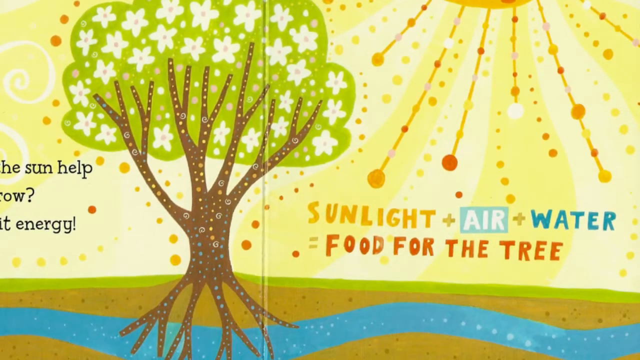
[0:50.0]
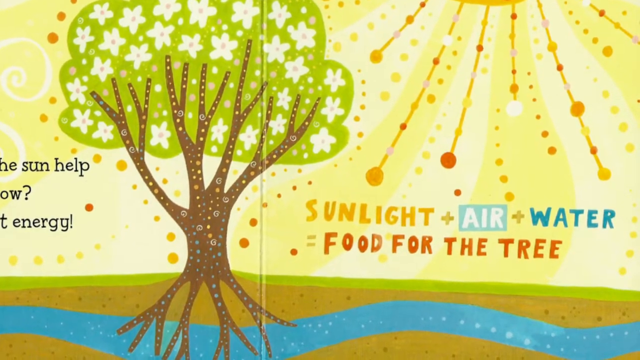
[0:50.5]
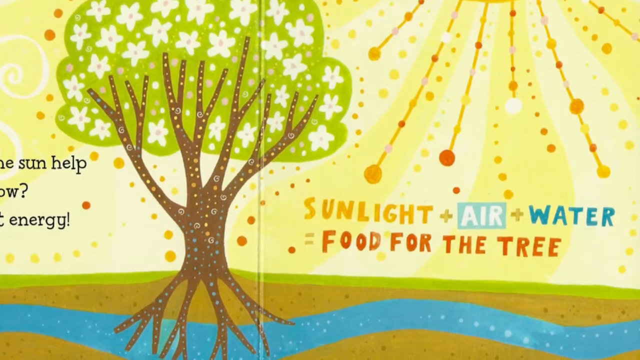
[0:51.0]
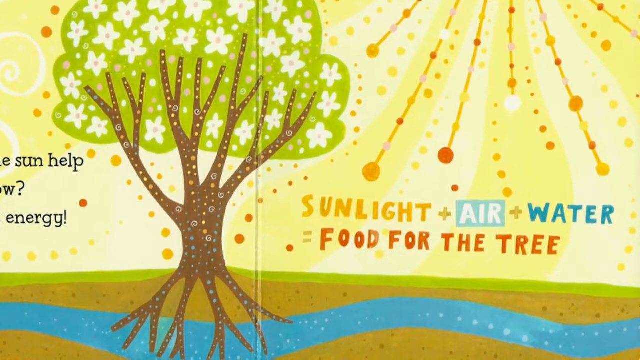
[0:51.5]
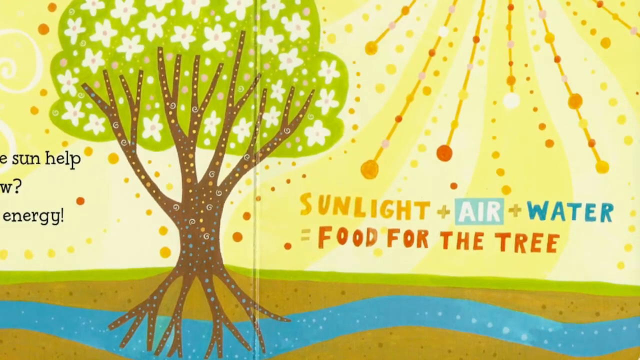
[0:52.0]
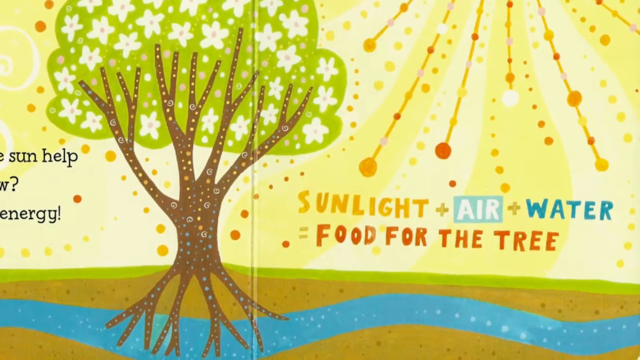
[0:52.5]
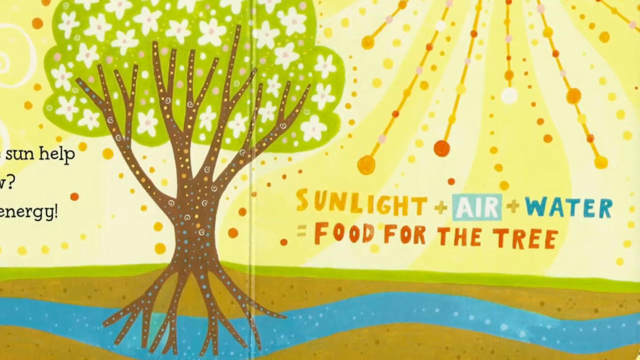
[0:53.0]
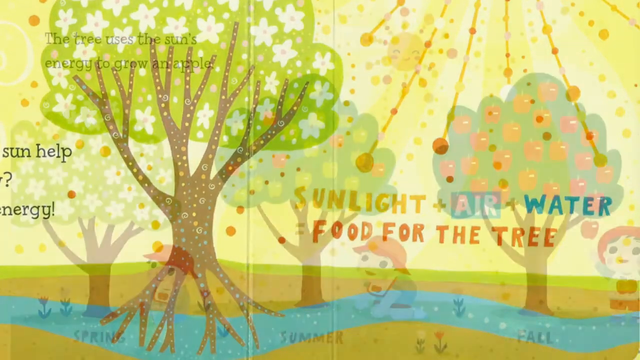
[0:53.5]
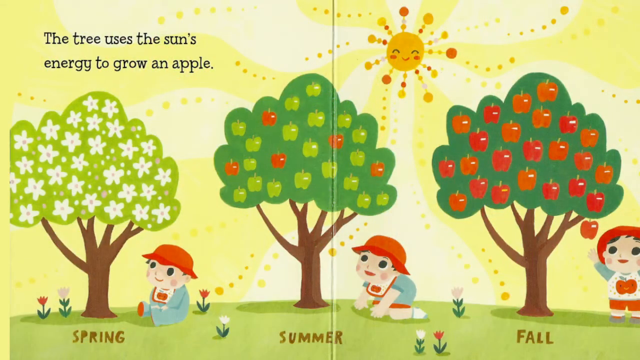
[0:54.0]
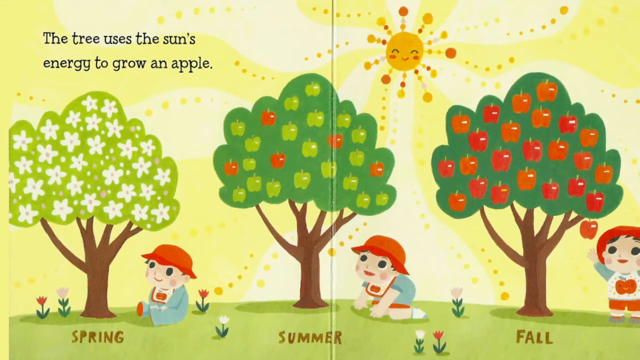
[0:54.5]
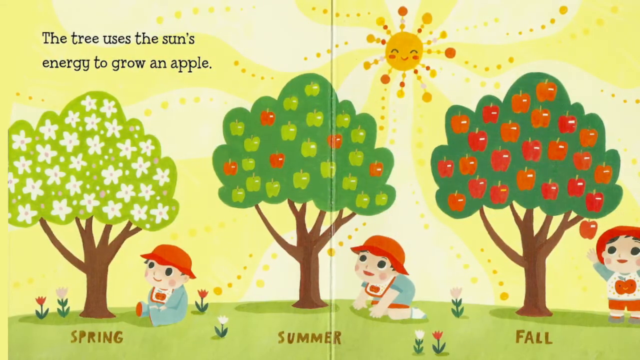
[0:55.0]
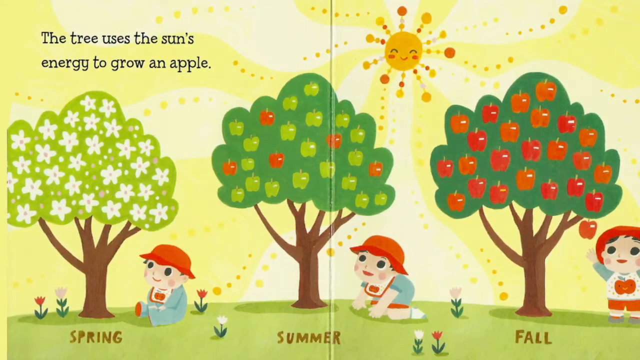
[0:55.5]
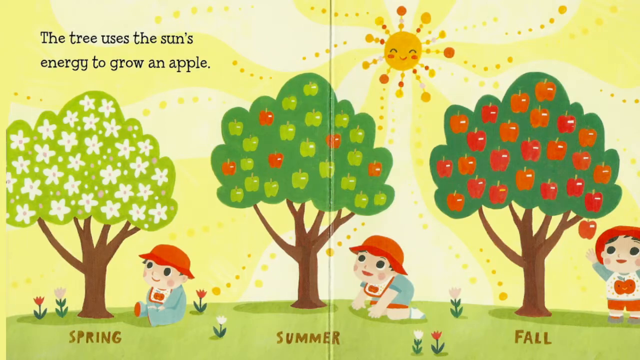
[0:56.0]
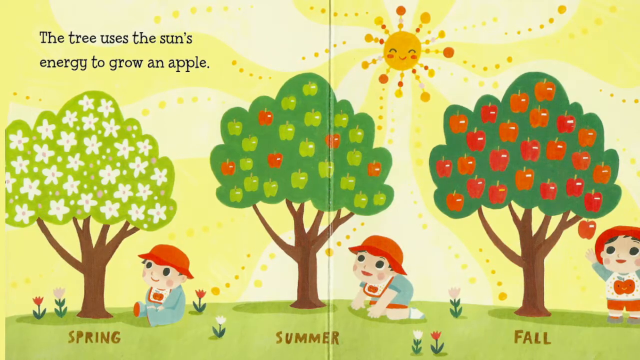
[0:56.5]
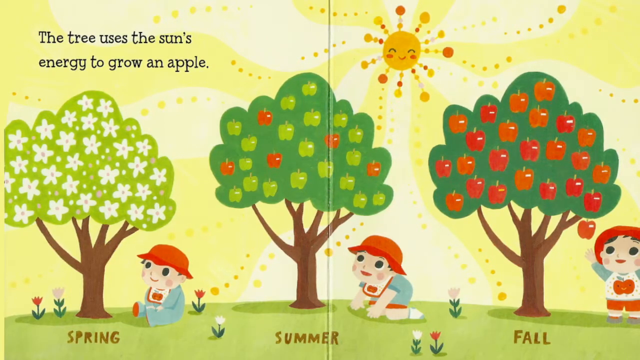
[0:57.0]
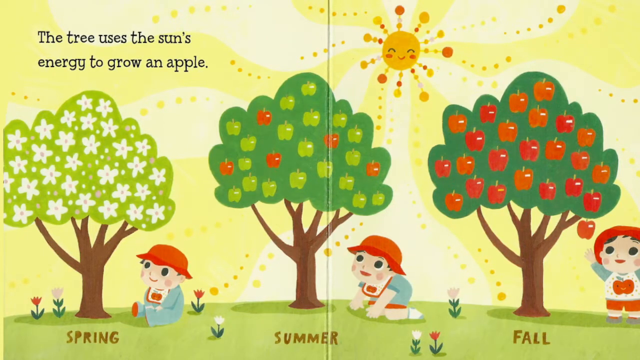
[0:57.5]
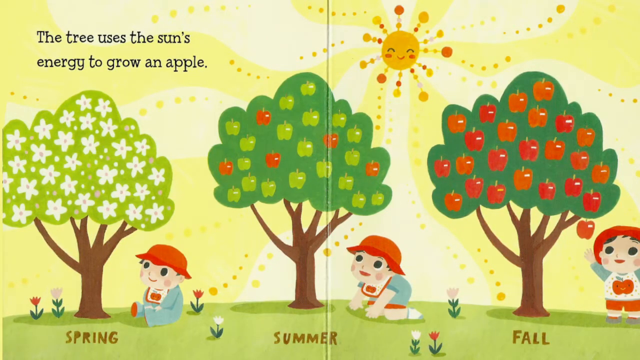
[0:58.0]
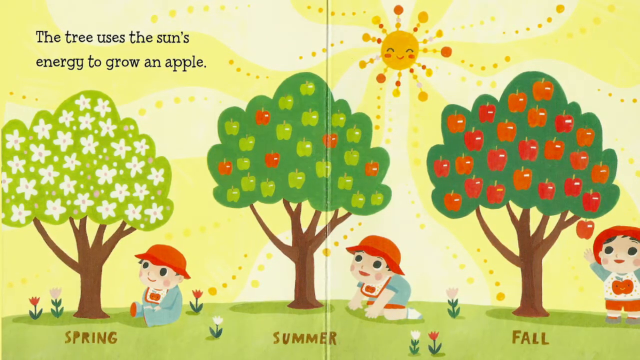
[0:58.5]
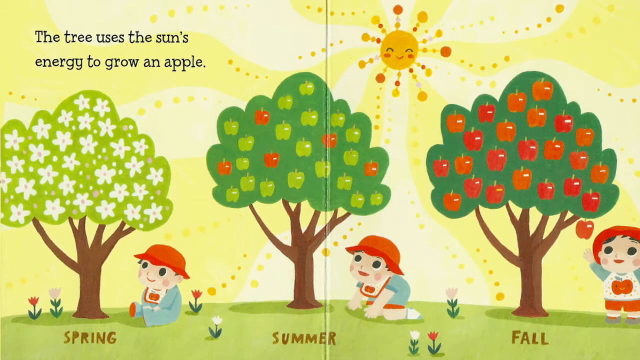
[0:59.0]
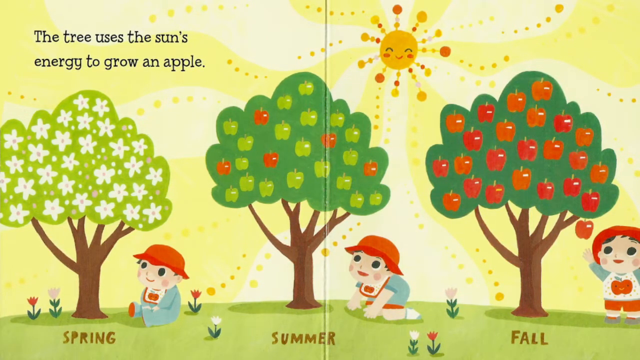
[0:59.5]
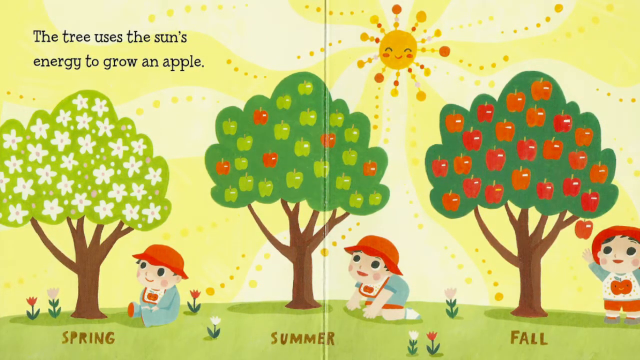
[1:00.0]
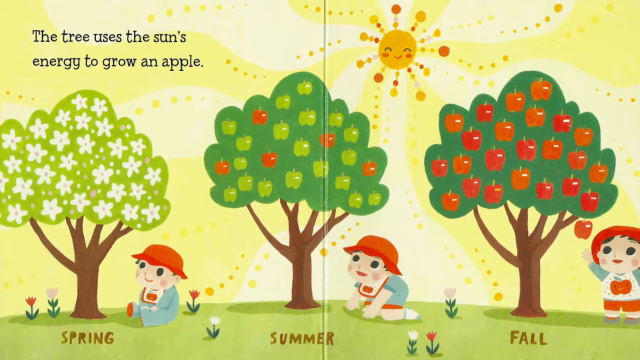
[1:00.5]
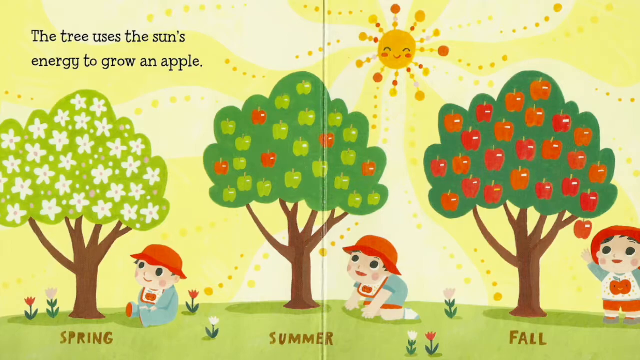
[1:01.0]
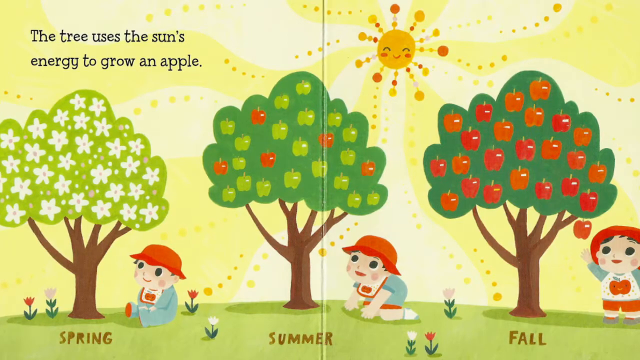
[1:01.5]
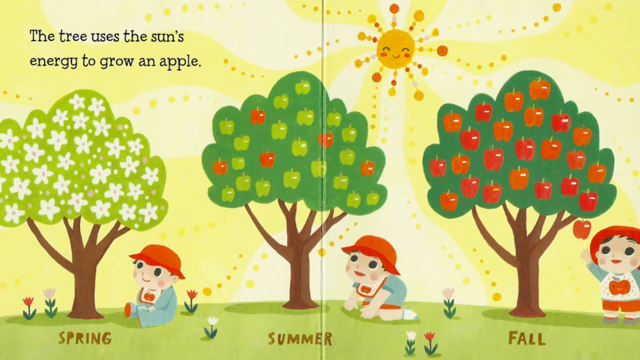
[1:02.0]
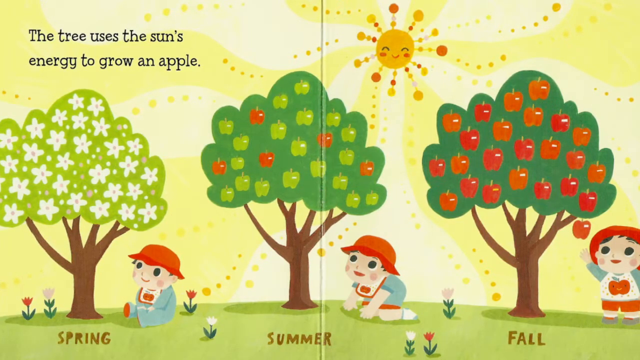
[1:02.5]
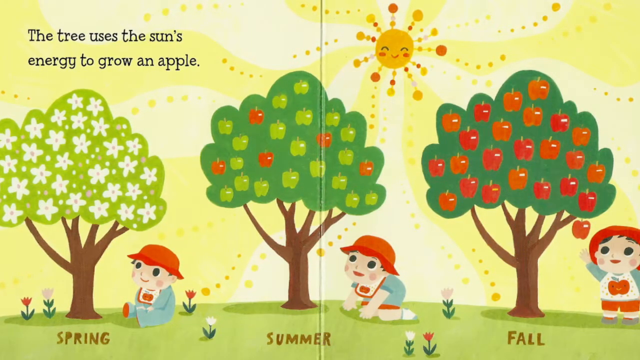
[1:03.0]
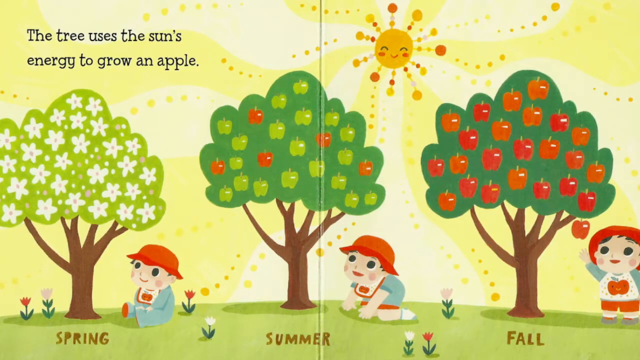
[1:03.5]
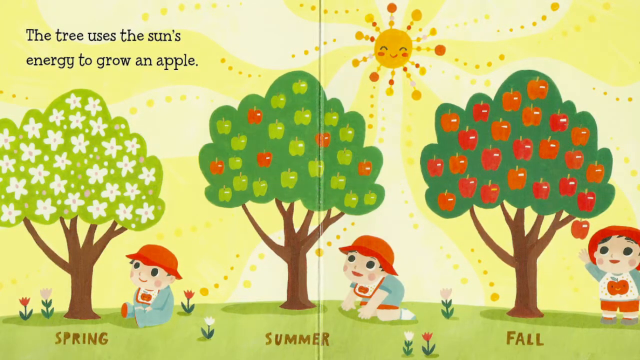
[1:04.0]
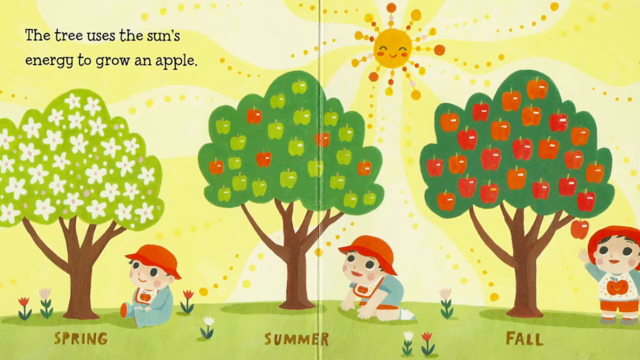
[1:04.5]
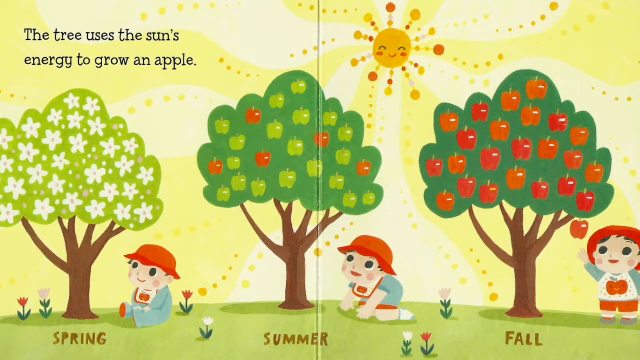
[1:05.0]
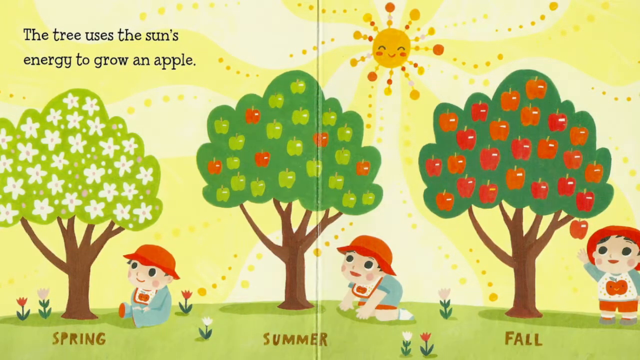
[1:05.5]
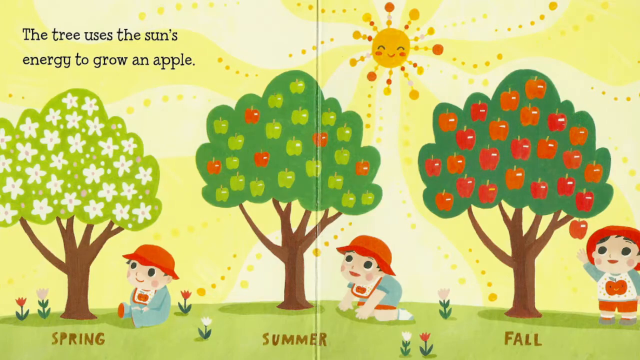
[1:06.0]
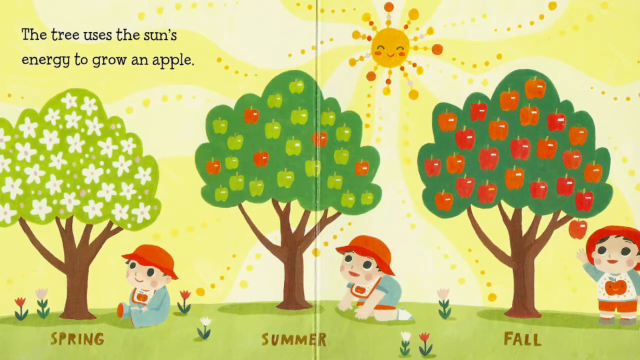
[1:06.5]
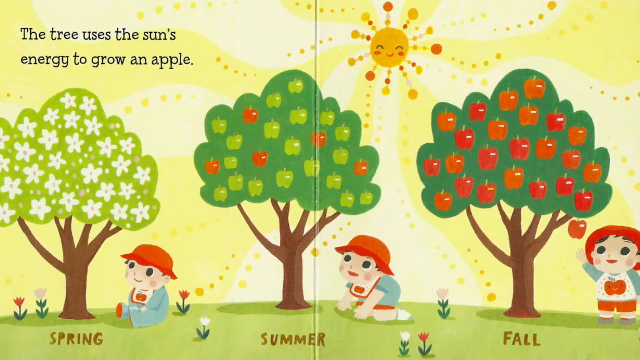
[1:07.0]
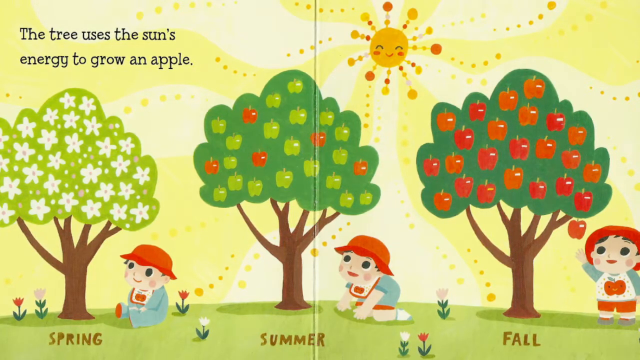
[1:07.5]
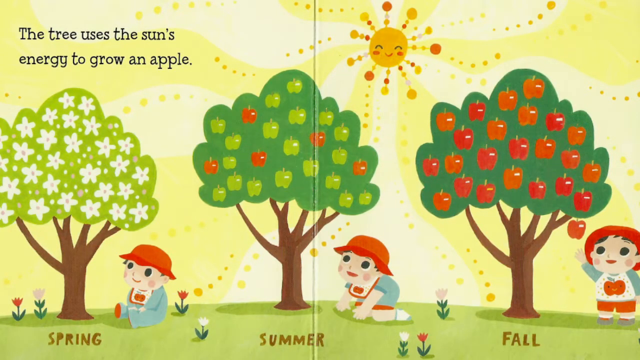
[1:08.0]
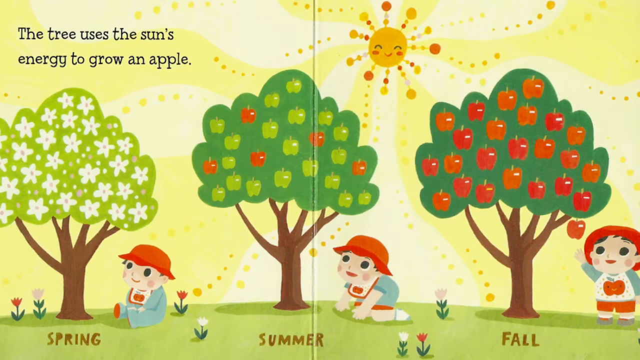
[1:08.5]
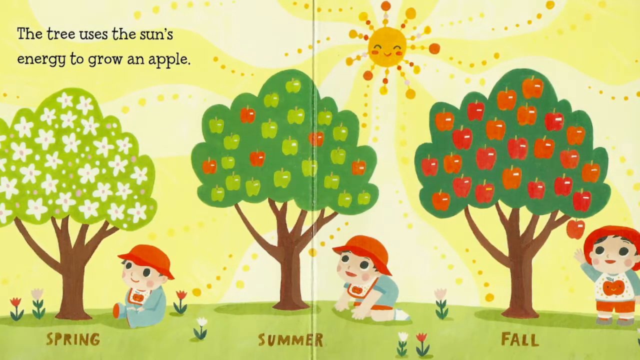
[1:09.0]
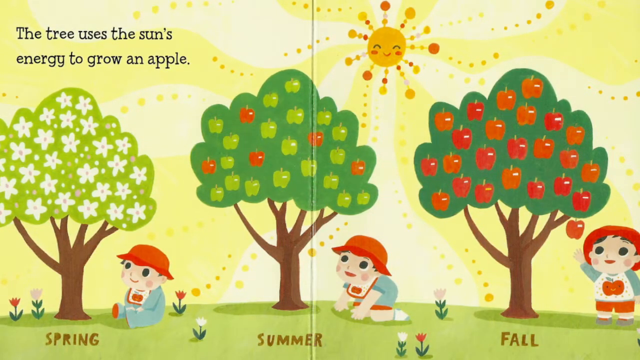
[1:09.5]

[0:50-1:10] The book is open to two pages showing three trees. The first tree is light green with flowers on it, and the child is sitting underneath it. At the second tree, the child is starting to stand up; this tree is darker green with a number of light green apples and five red apples. The tree all the way on the right is a little taller and darker green, with red and orange apples, and the child stands a little taller, reaching for an apple. Above the first tree, the text reads "the tree uses the sun's energy to grow an apple" in black, in a kind of childlike font. The sun is above the second and third trees on the right page. The background continues to be yellow. The view stays on this for a little while, then focuses on the right before going back to the whole page. There is something like a river underneath the tree.